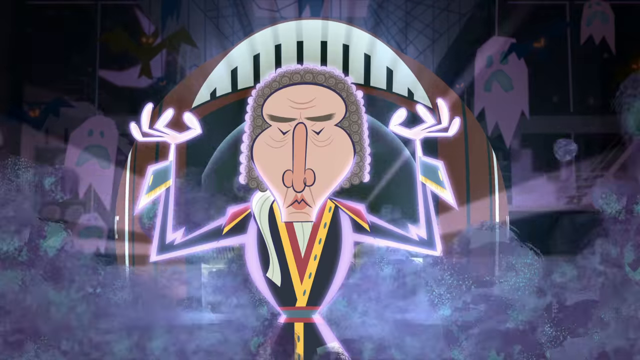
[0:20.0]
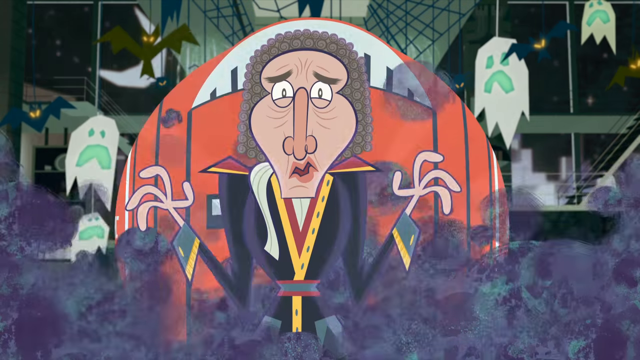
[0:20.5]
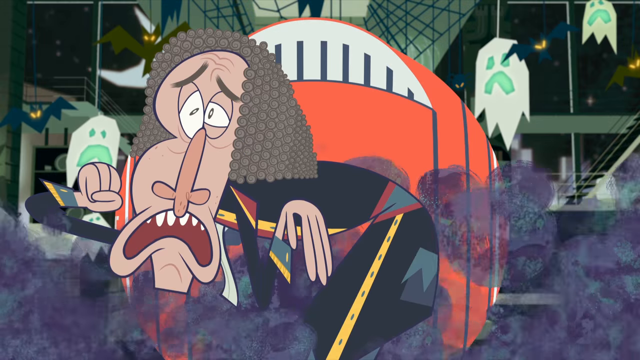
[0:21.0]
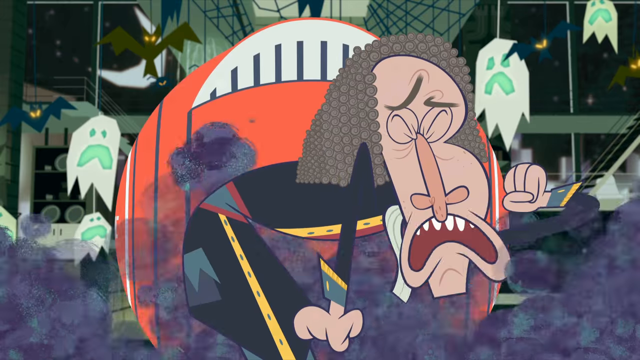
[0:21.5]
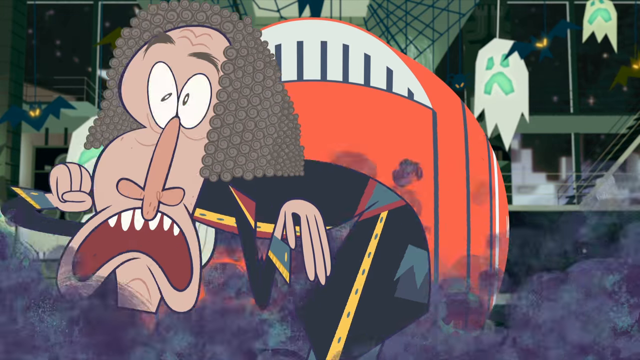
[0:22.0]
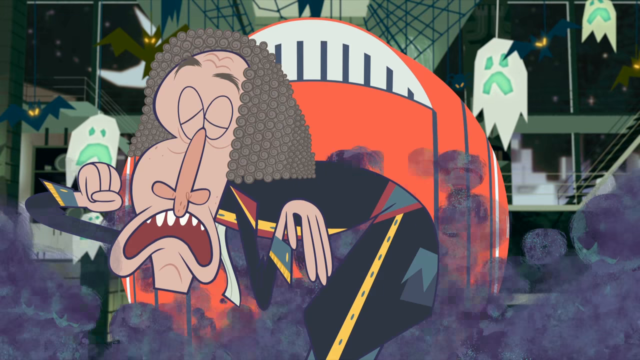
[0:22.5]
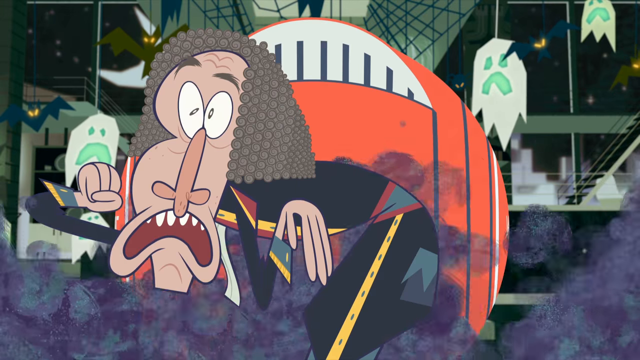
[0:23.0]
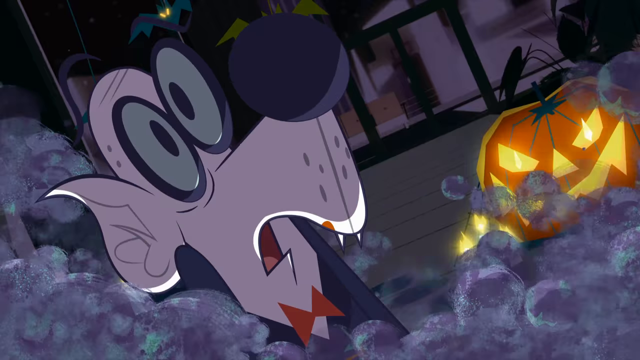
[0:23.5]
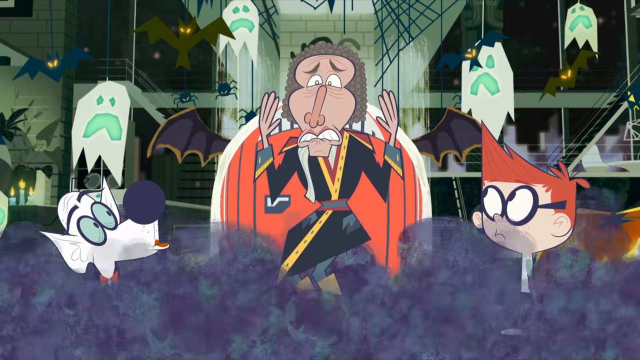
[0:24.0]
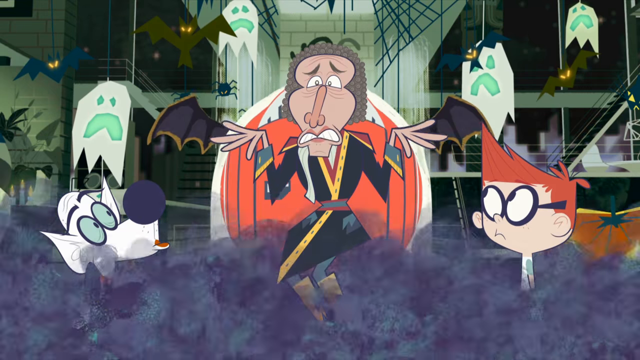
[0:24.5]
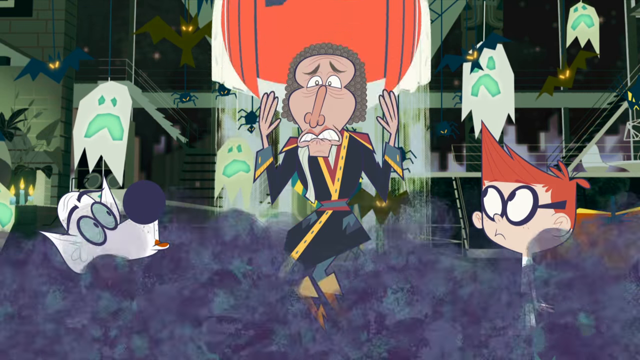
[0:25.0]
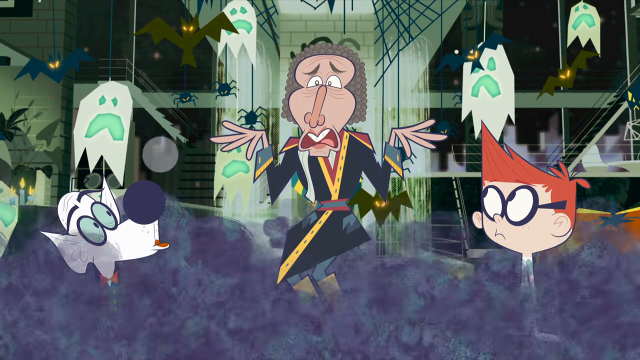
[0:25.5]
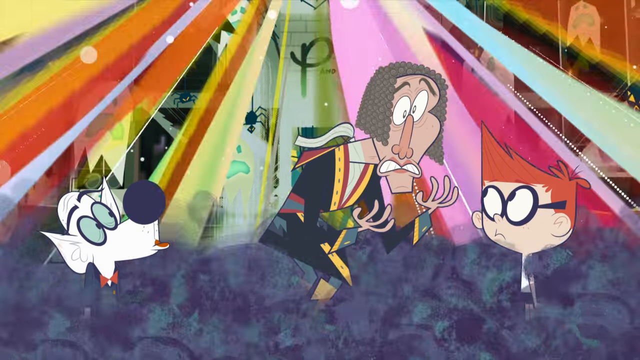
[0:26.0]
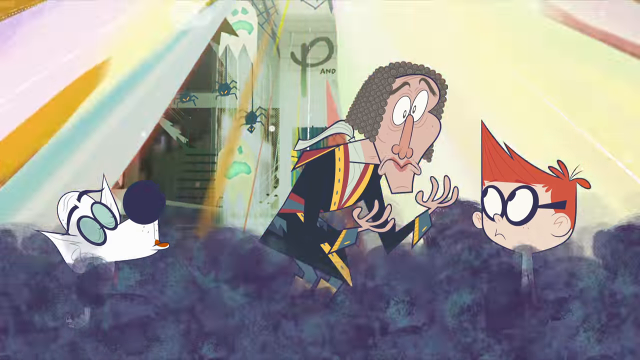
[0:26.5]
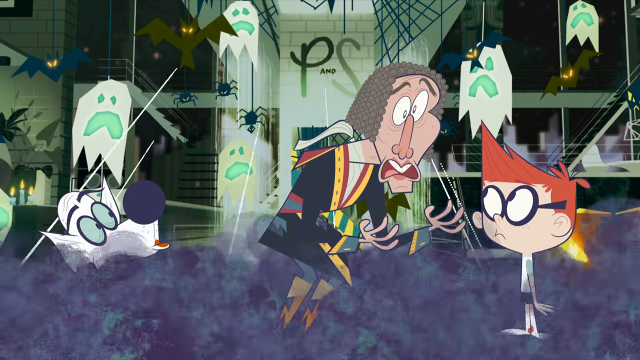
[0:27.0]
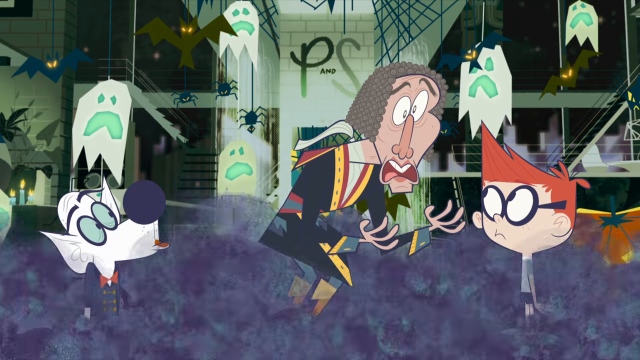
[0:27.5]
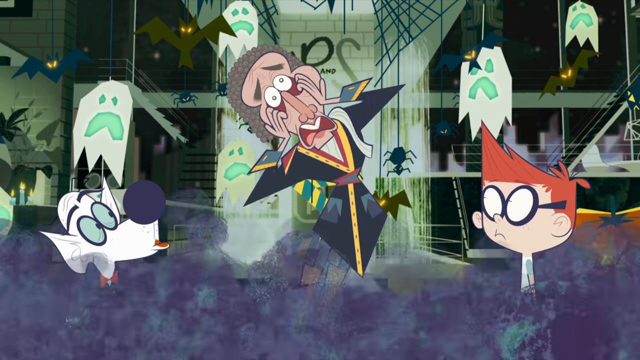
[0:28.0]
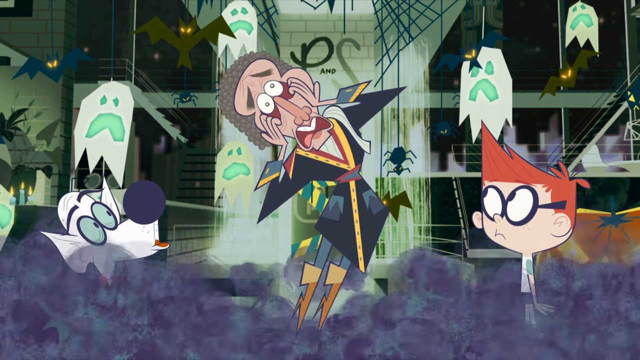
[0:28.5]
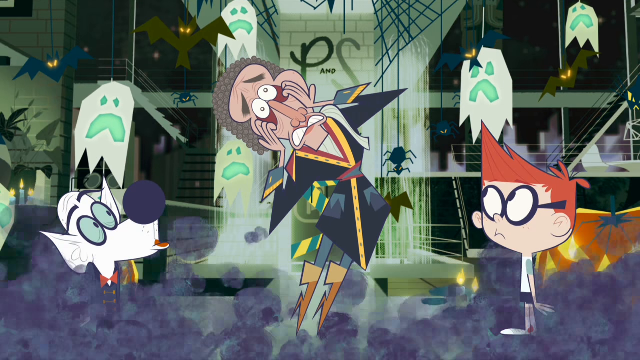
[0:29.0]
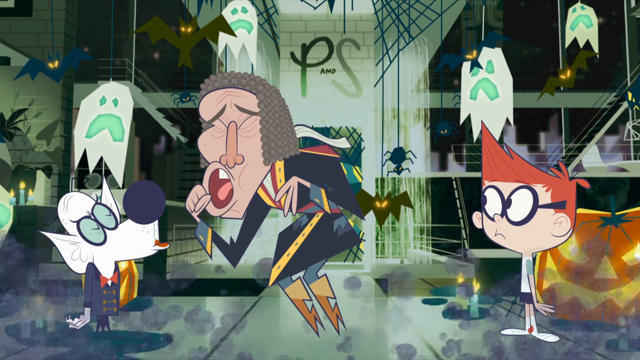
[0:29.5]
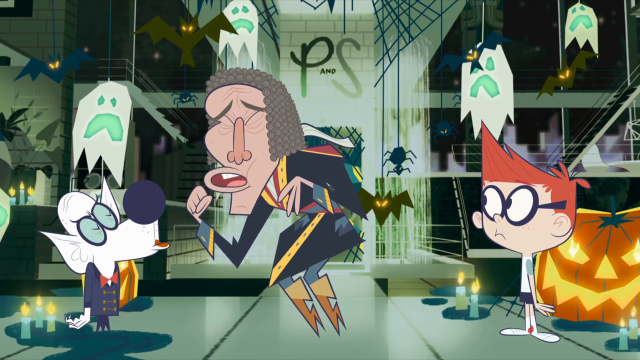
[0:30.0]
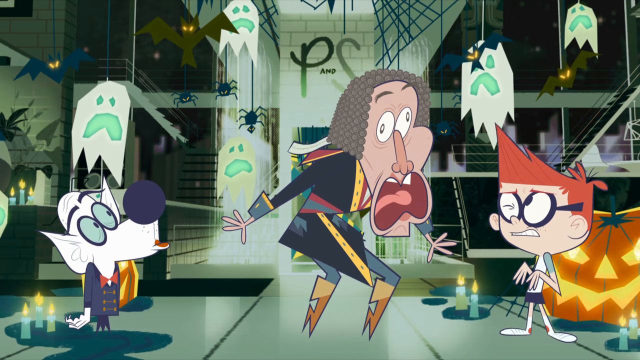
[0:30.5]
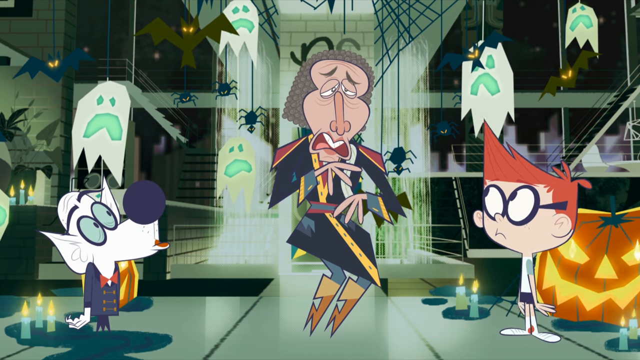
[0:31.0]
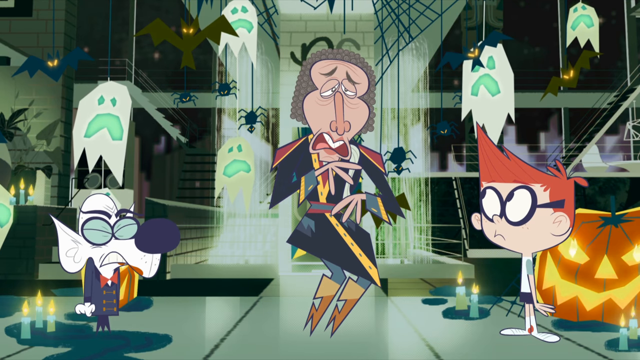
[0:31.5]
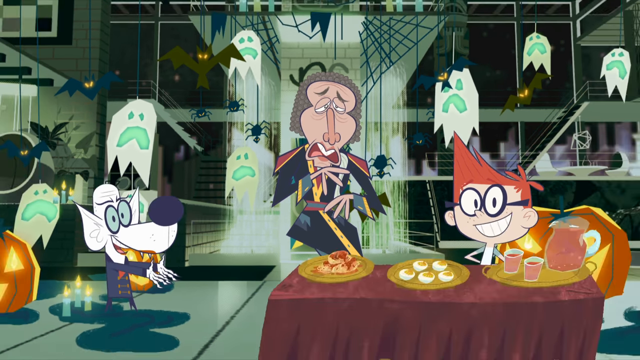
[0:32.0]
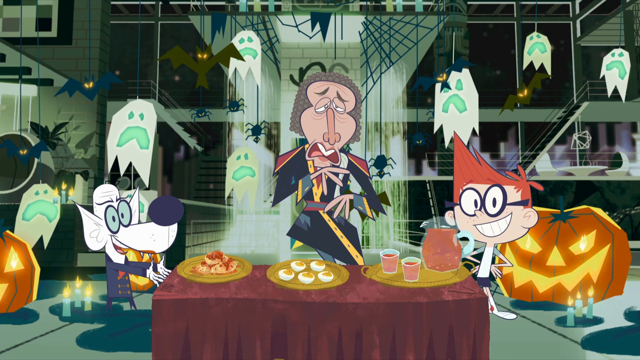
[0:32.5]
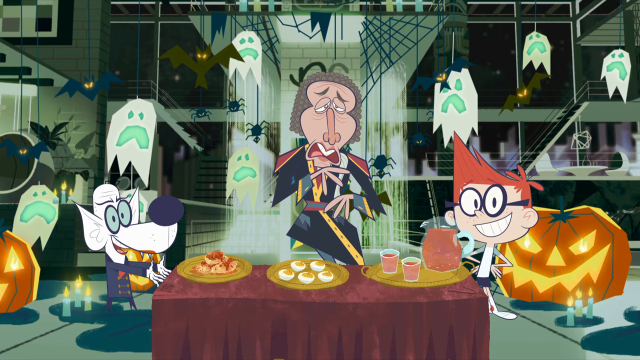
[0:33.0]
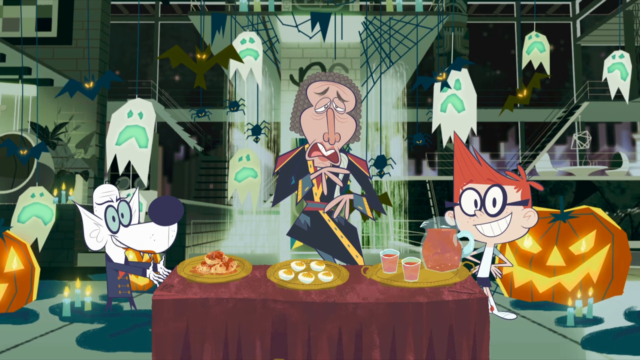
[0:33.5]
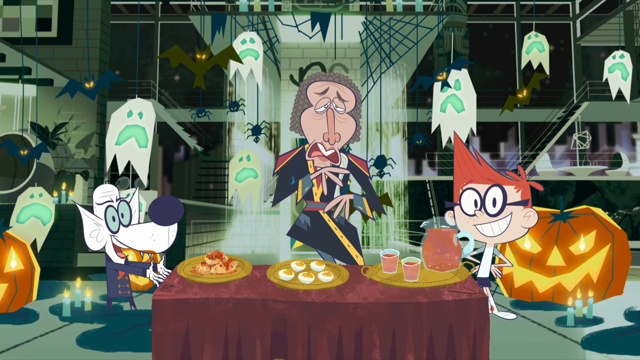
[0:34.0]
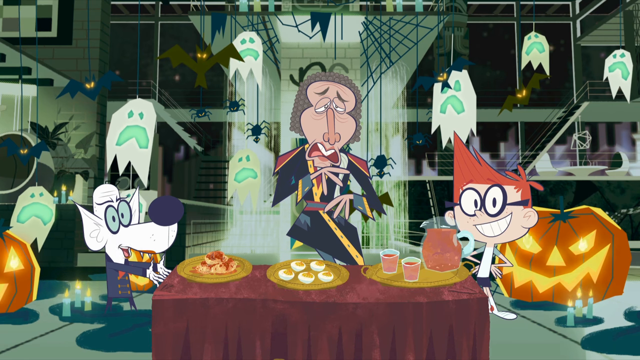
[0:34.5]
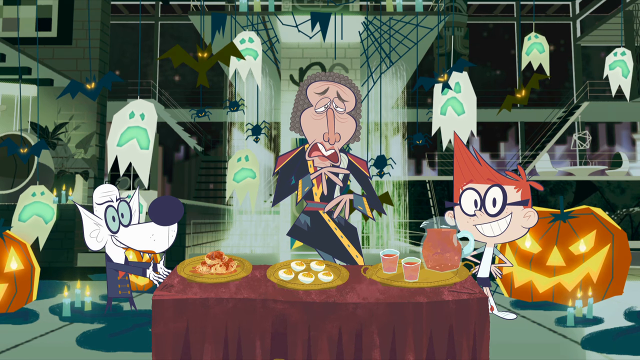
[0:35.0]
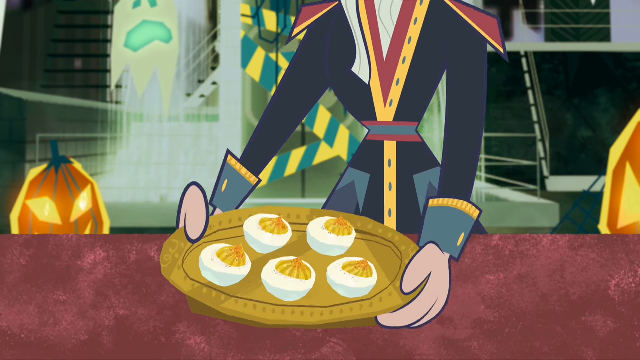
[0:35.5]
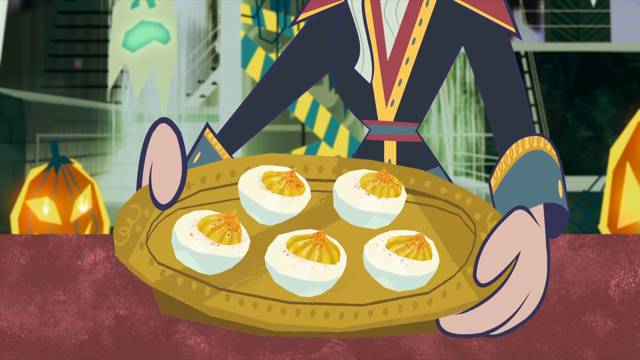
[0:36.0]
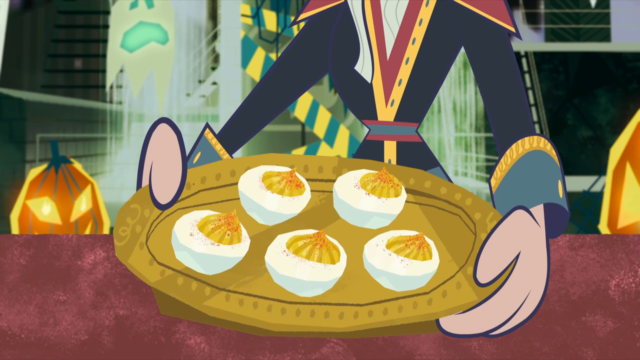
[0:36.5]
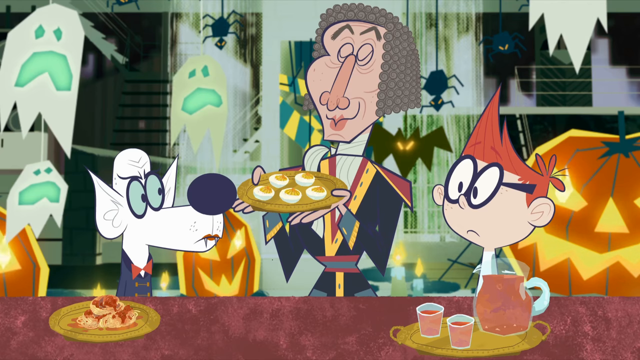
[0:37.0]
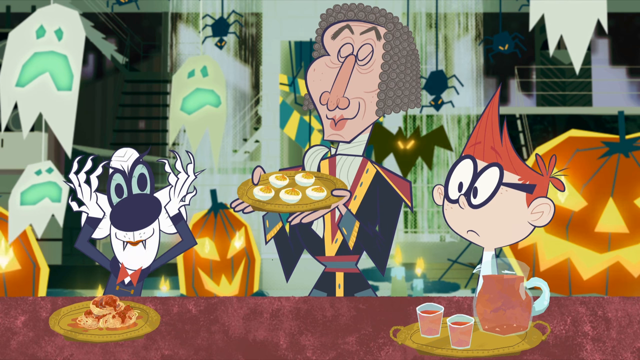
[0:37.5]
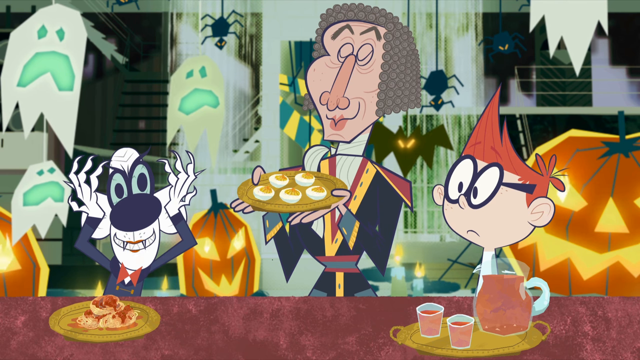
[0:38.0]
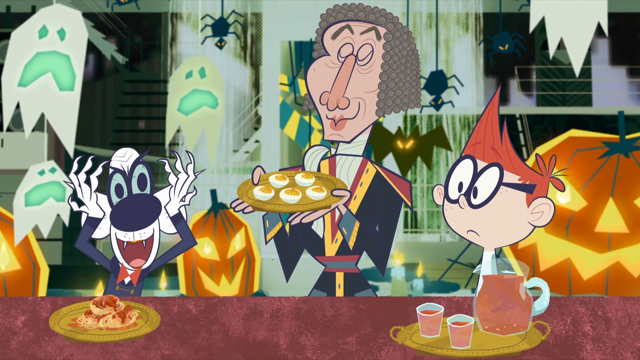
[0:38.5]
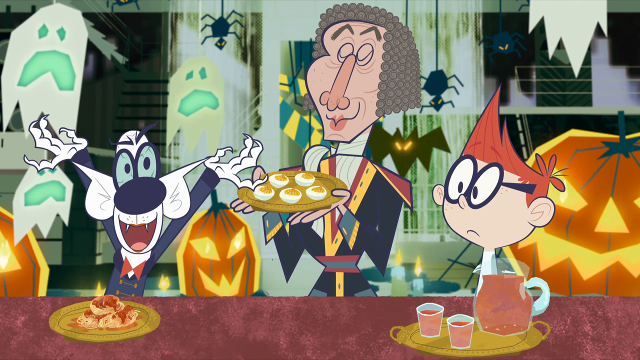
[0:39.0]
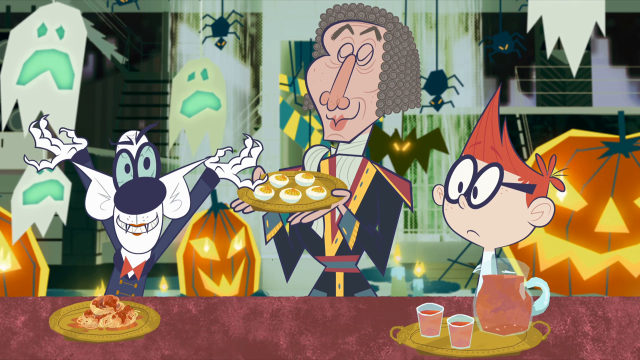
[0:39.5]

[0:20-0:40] The Mozart-like historical figure, apparently a vampire, exits the spaceship looking disgusted. The boy and the dog both look taller and much older. A quick angle shift shows the dog reacting to the space visitor who has just landed, and he seems to be starting to freak out. A table of food and drinks is brought out. On the left, in front of the dog, is something like a pancake or chicken, hard to identify, with red on top and a solid, sort of tan layer underneath. On the right, the kid is in front of jugs of some sort of drink. In the center are onions or garlic, something with garlic or just pure garlic. The supposed vampire grabs the entire tray and holds it up, and the other characters look shocked or surprised, especially the dog.